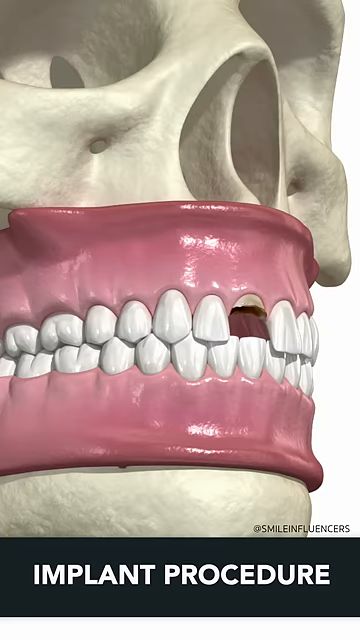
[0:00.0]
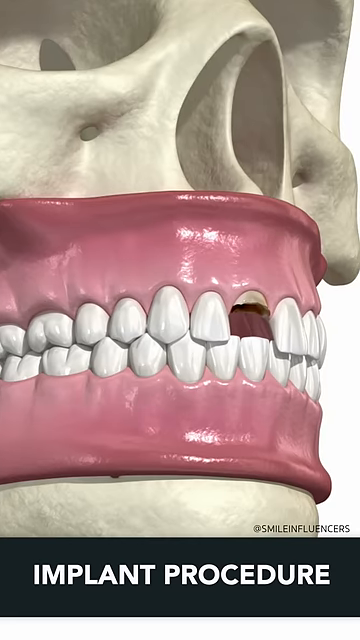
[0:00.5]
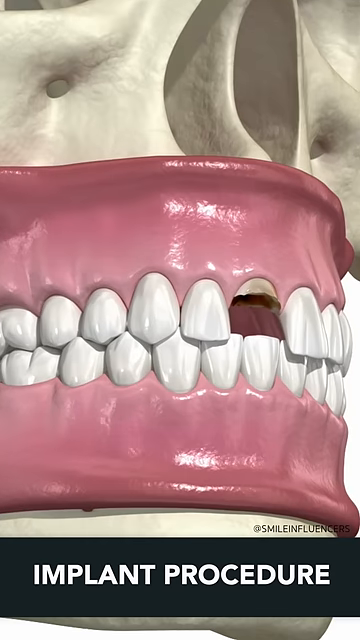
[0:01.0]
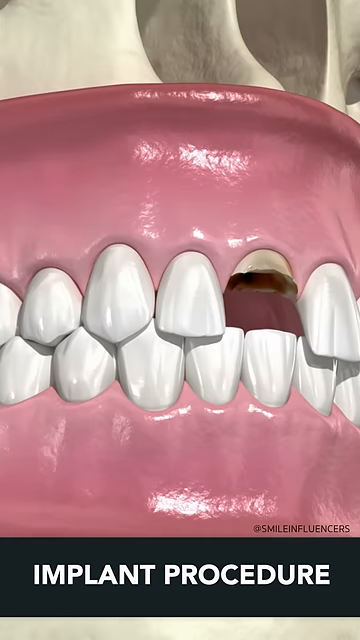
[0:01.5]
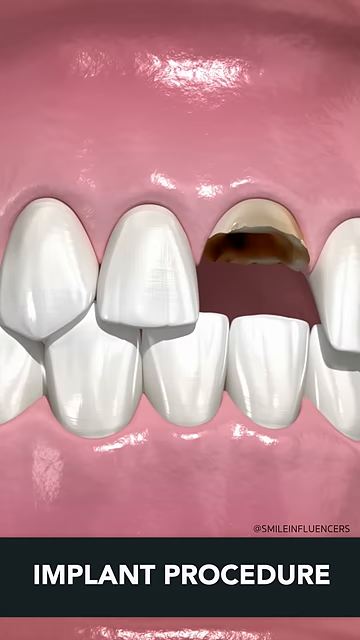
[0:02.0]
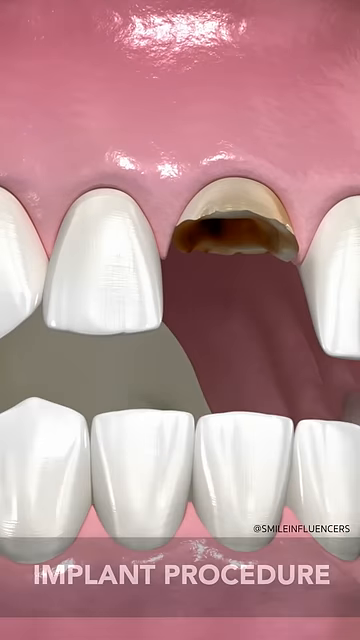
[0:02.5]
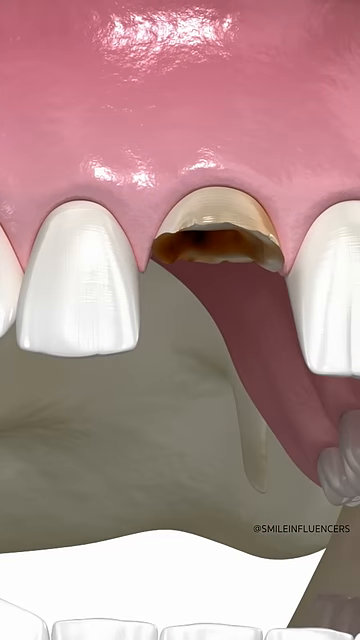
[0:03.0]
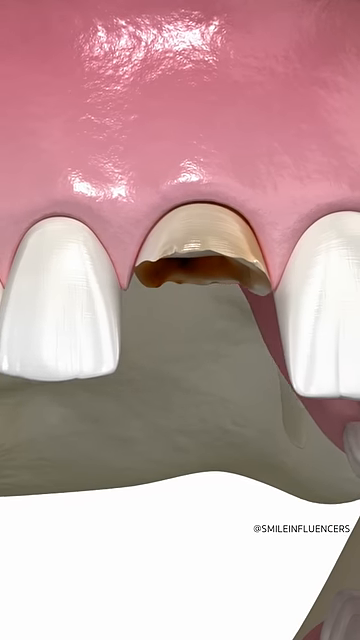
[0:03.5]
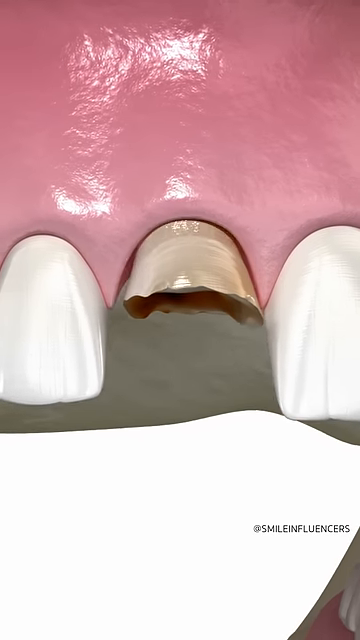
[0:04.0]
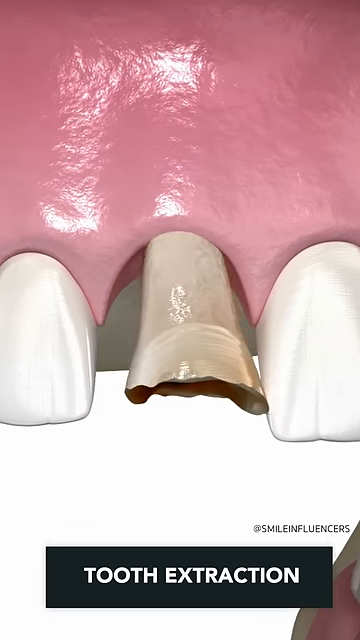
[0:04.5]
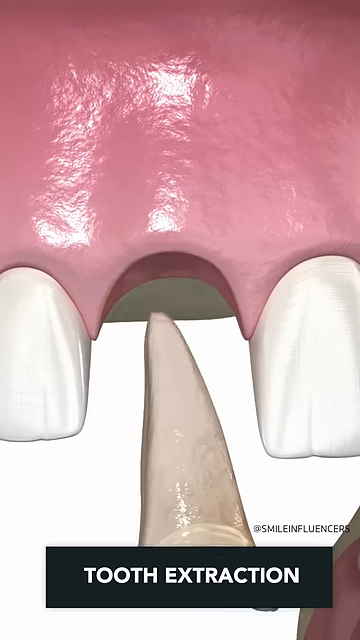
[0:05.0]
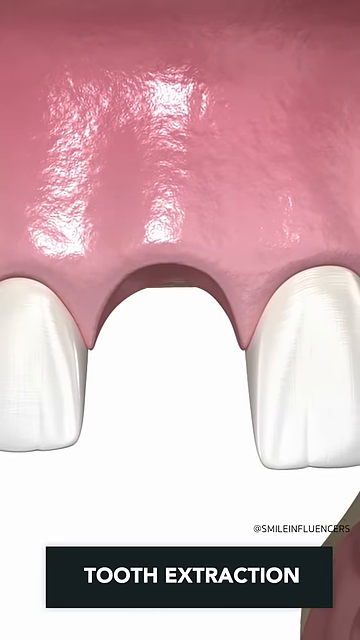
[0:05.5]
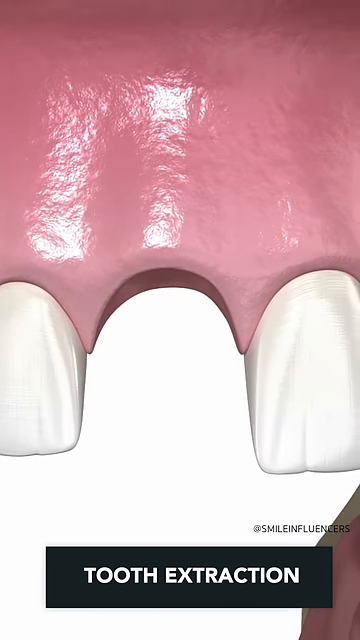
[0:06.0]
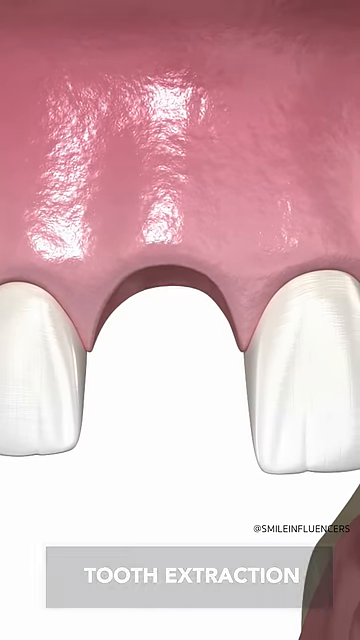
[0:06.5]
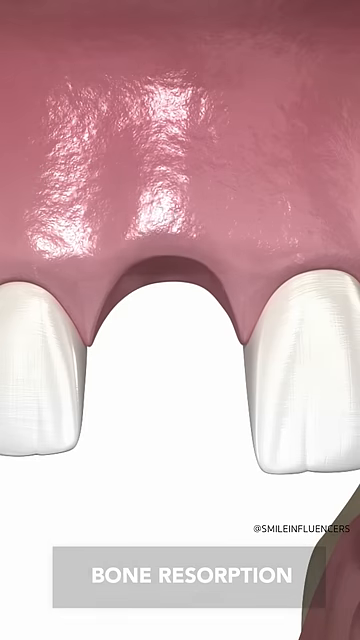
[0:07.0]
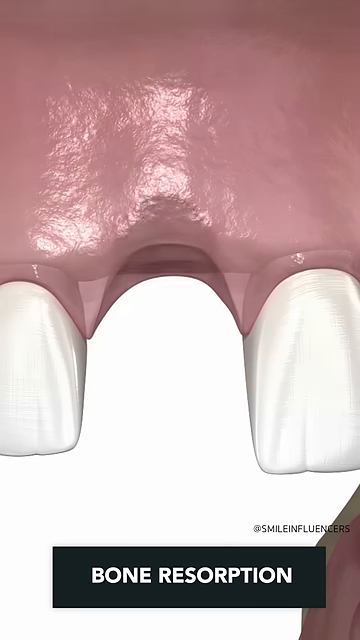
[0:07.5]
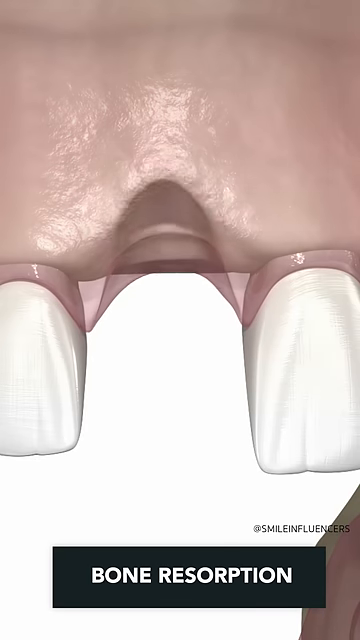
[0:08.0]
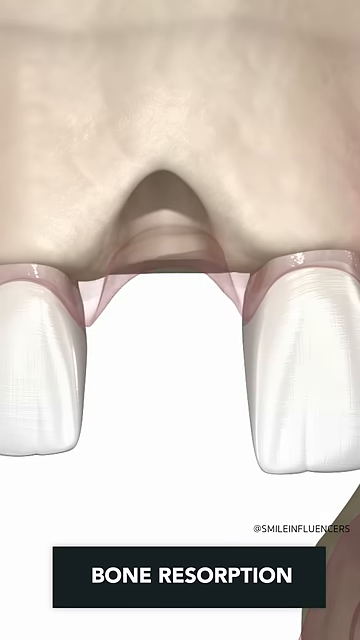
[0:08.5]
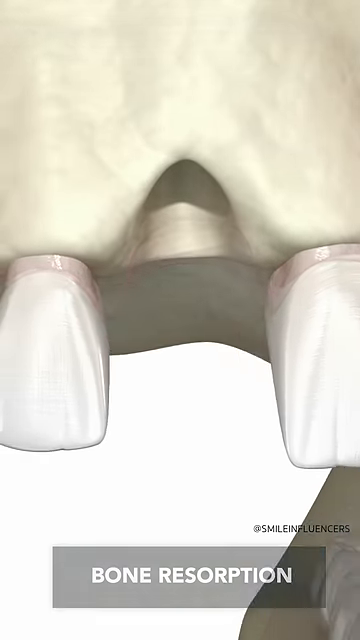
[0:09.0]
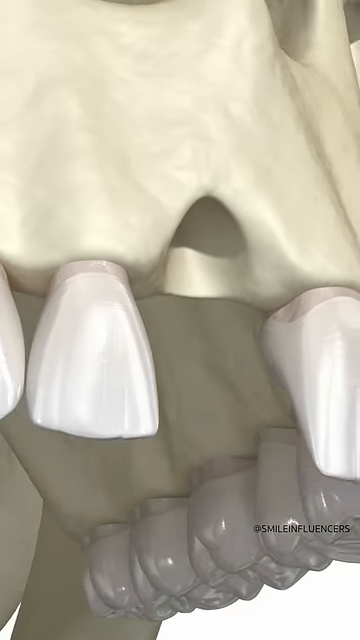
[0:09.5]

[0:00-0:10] This medical video opens with a digital image of a skull, with a person's pink gums and teeth, also digital images, shown over it. One of the front teeth is partially missing, and it looks like the tooth has been broken out of the mouth. At the bottom of the screen a black banner reads "Implant procedure," and directly above it is a copyright symbol for SmileInfluencers. The camera zooms in on the broken tooth, and the video shows a tooth extraction taking place, followed by bone resorption. Each of these steps is clearly labeled with a black banner at the bottom of the screen. Everything happens very quickly, and the screens change rapidly. At the end, the camera zooms back out and away from the skull a bit.